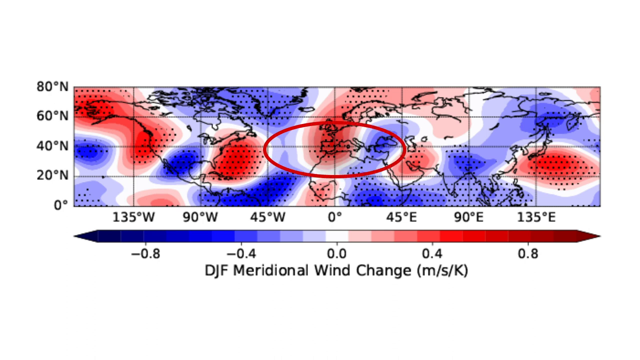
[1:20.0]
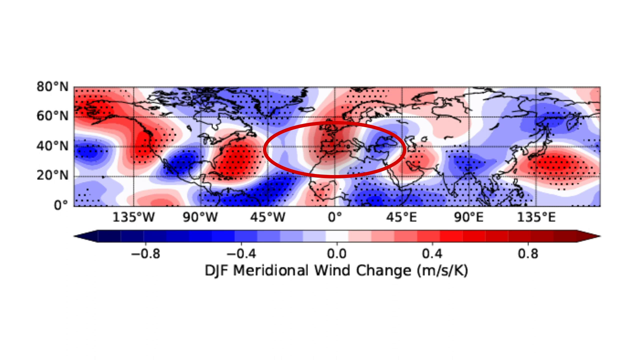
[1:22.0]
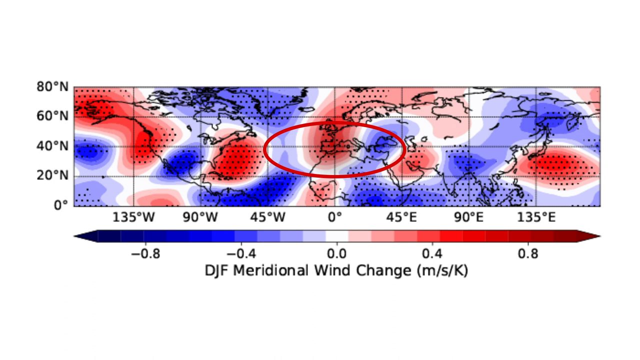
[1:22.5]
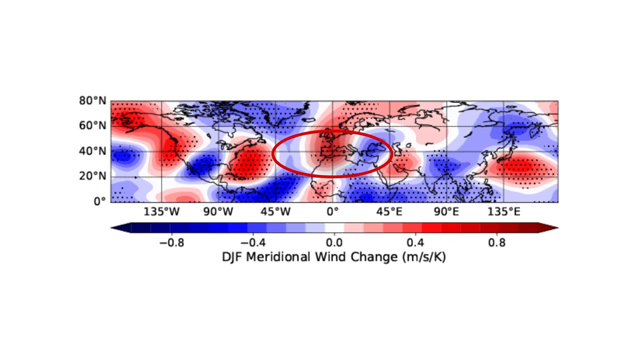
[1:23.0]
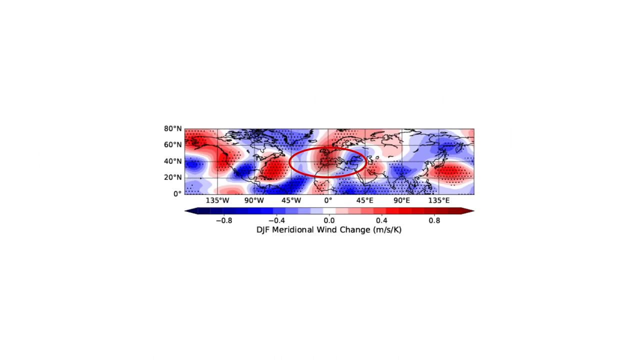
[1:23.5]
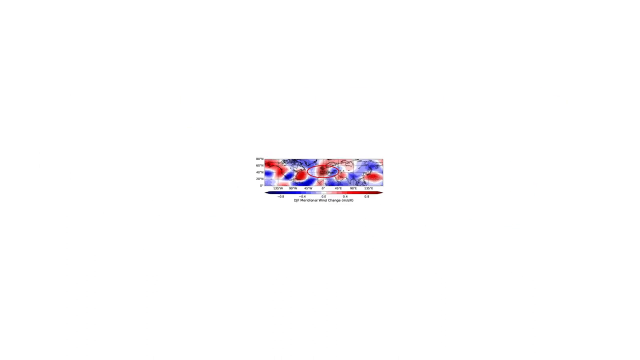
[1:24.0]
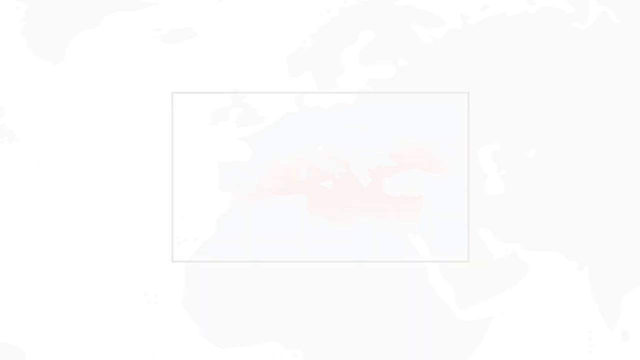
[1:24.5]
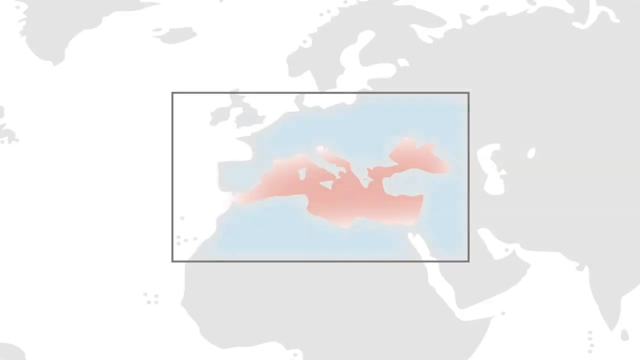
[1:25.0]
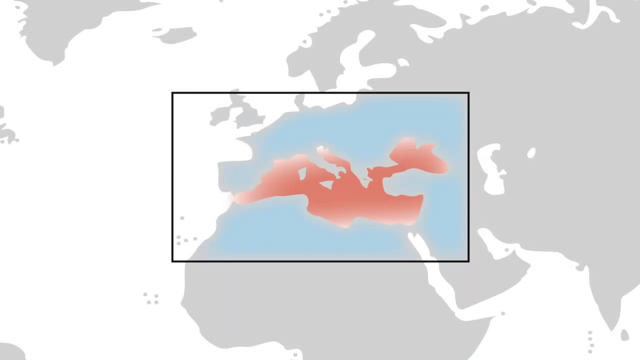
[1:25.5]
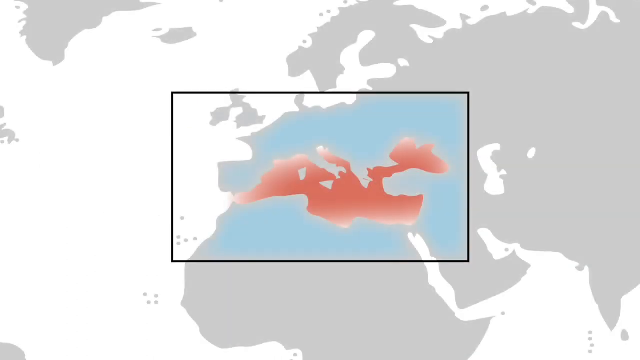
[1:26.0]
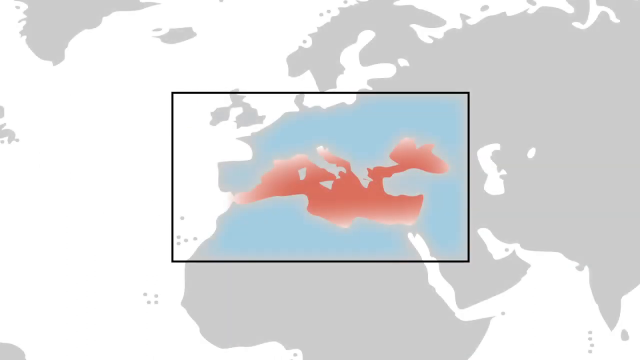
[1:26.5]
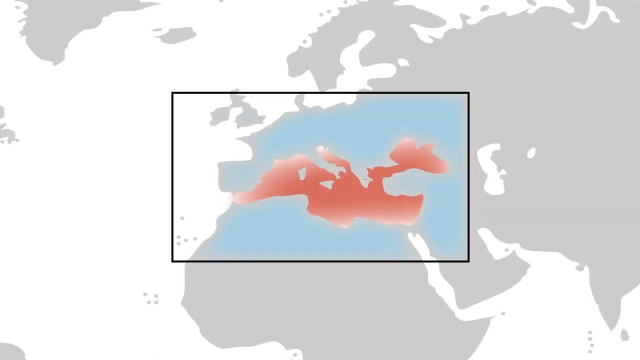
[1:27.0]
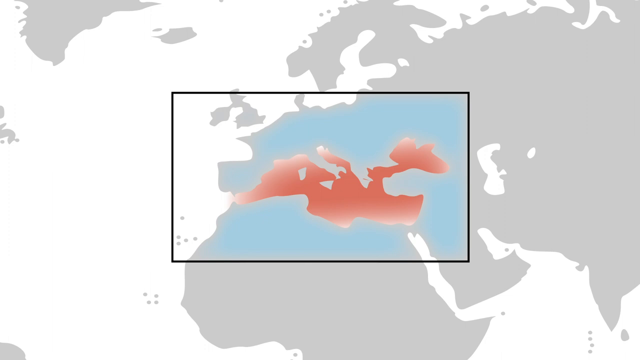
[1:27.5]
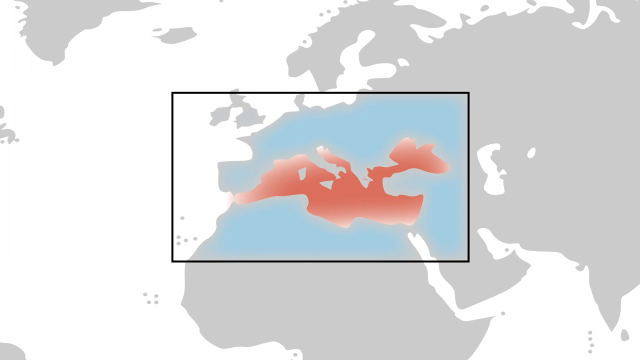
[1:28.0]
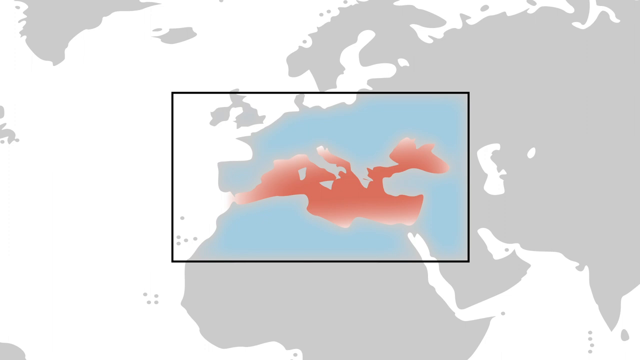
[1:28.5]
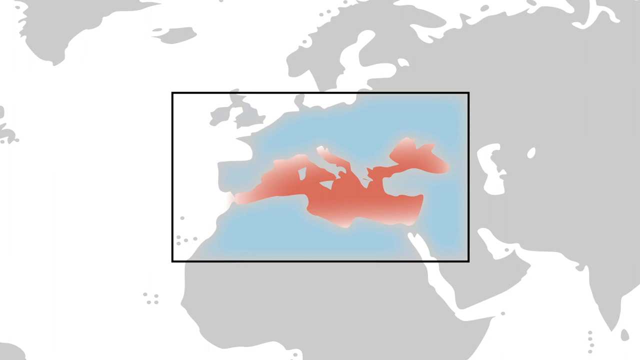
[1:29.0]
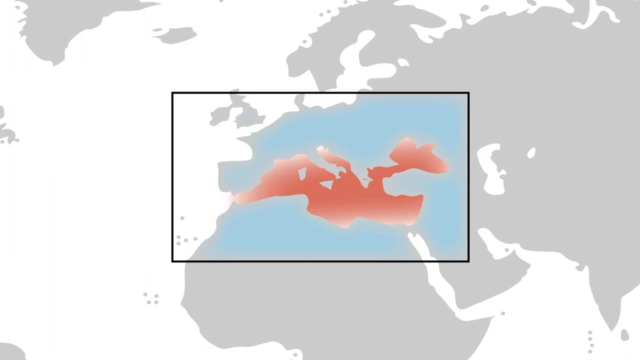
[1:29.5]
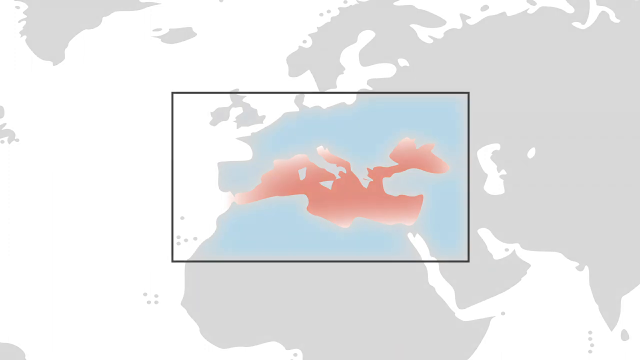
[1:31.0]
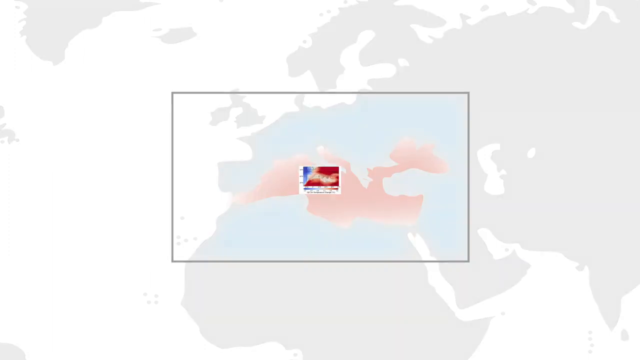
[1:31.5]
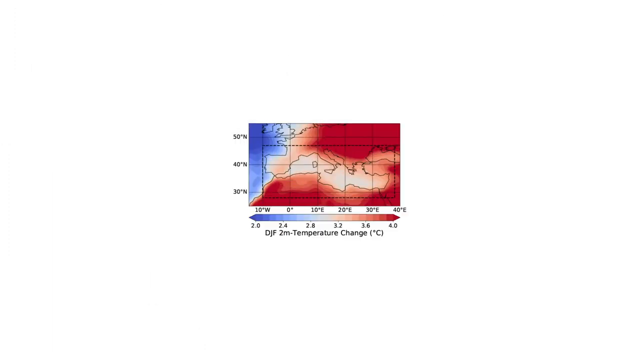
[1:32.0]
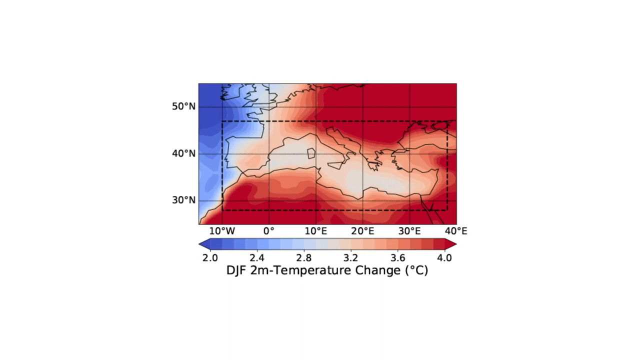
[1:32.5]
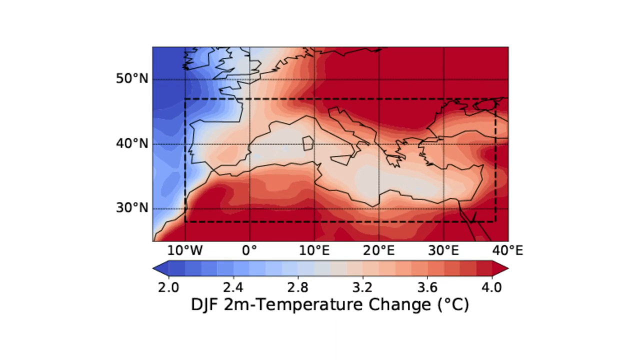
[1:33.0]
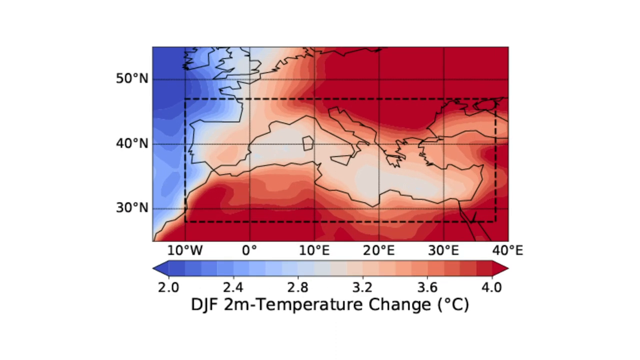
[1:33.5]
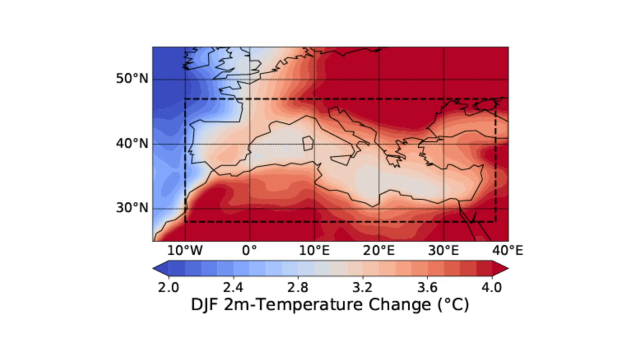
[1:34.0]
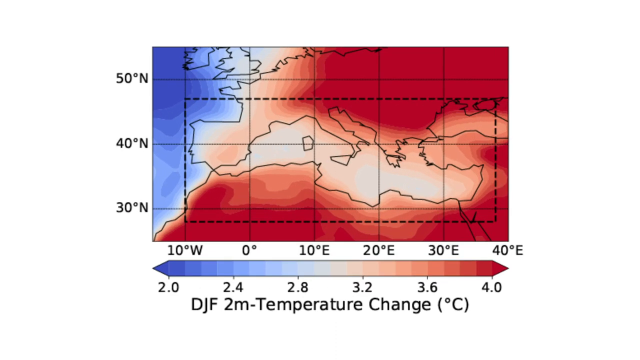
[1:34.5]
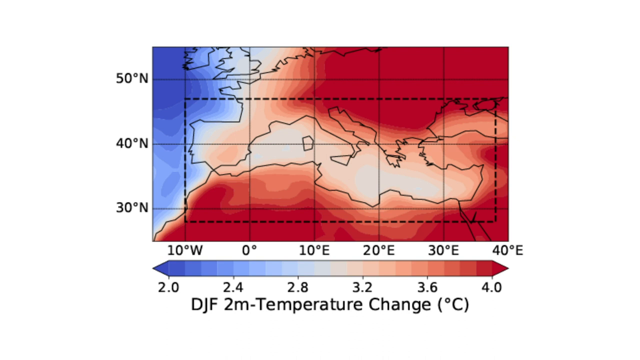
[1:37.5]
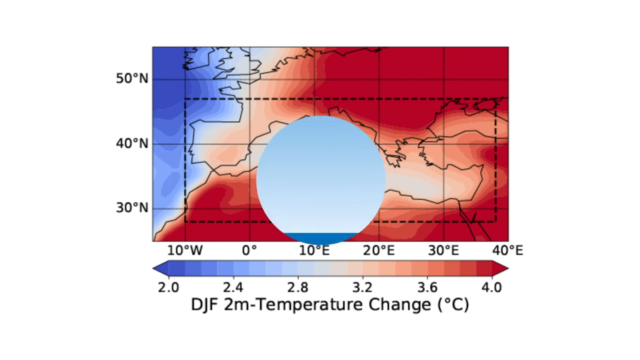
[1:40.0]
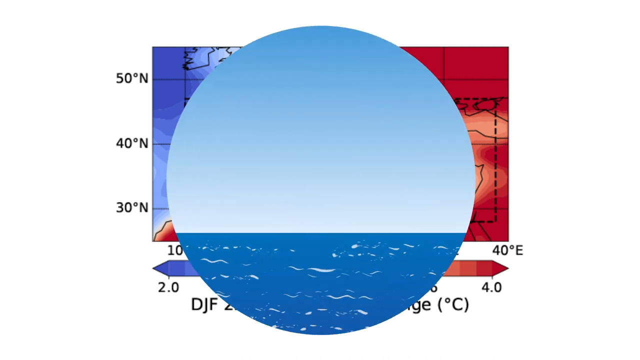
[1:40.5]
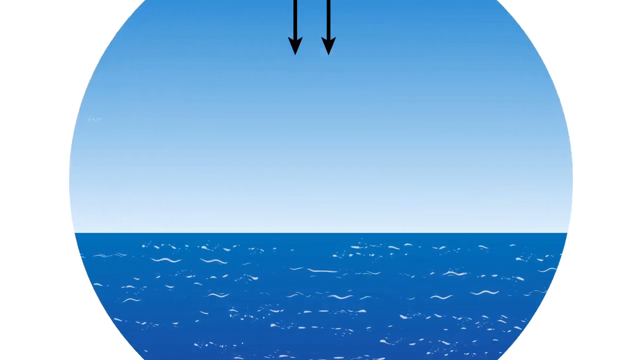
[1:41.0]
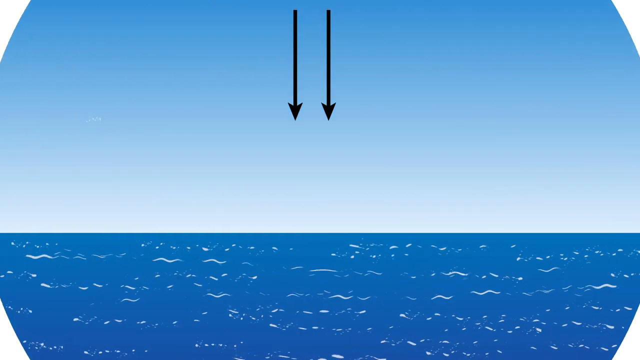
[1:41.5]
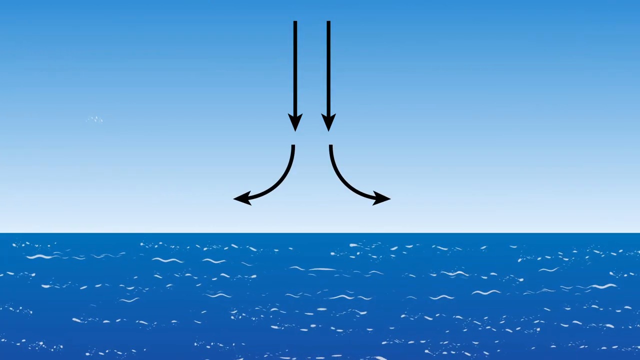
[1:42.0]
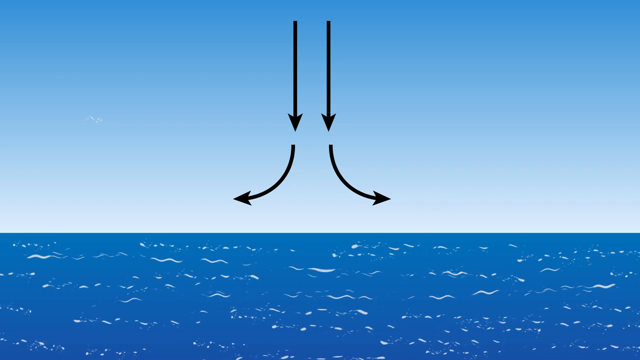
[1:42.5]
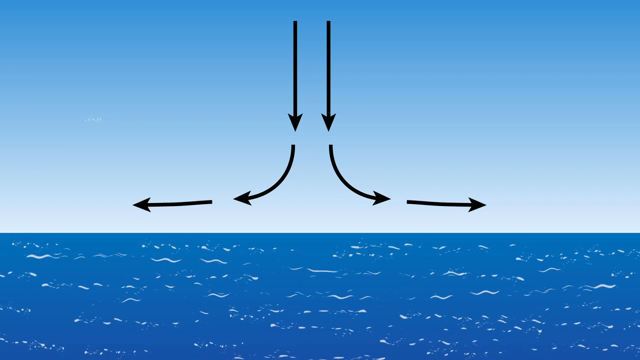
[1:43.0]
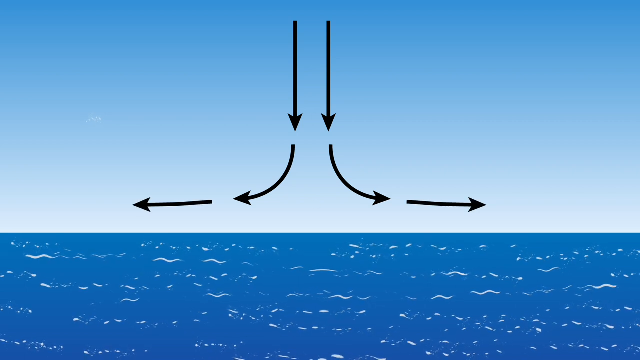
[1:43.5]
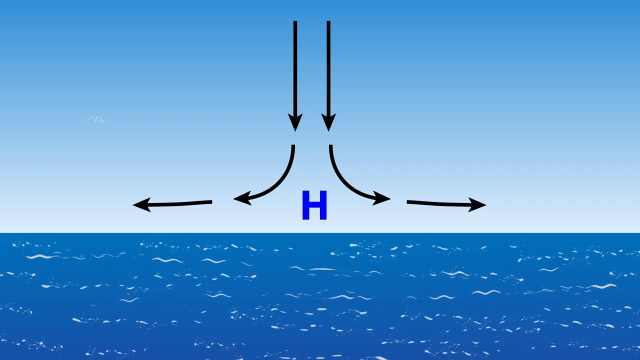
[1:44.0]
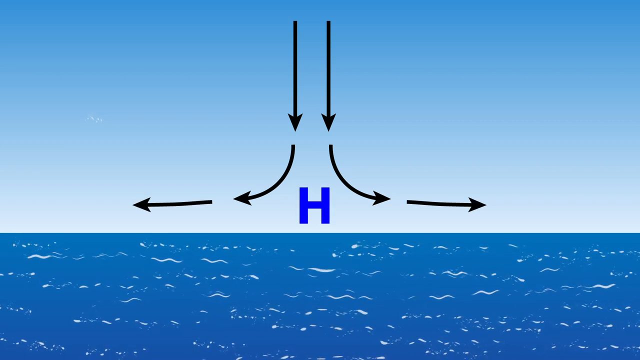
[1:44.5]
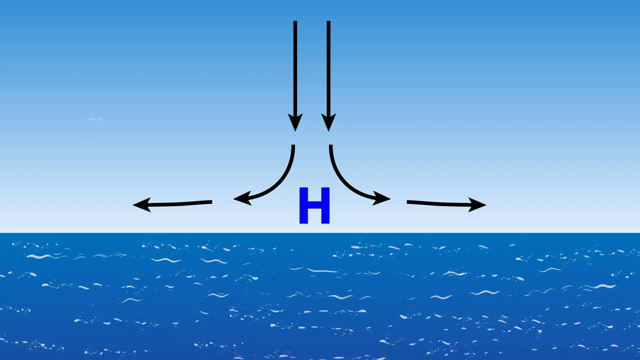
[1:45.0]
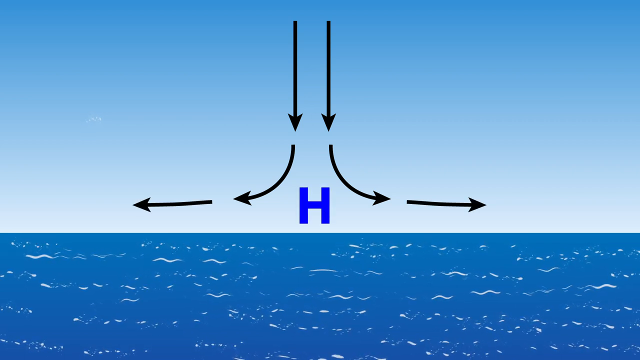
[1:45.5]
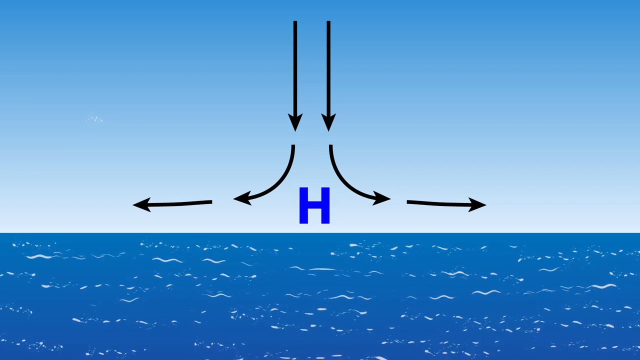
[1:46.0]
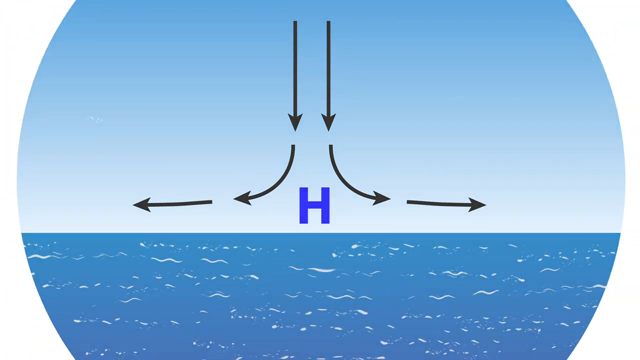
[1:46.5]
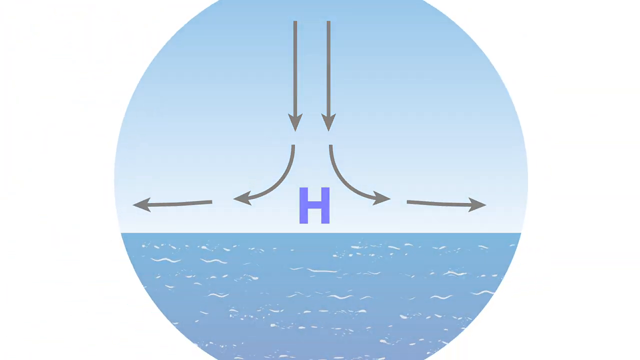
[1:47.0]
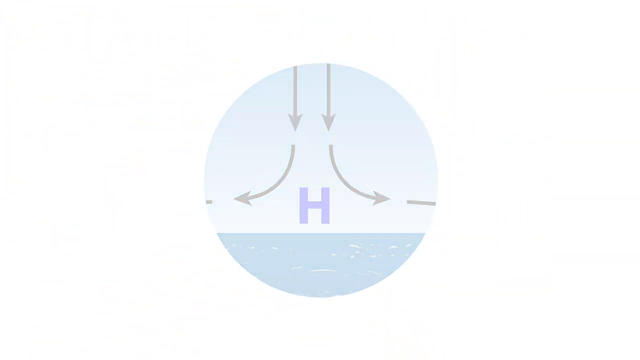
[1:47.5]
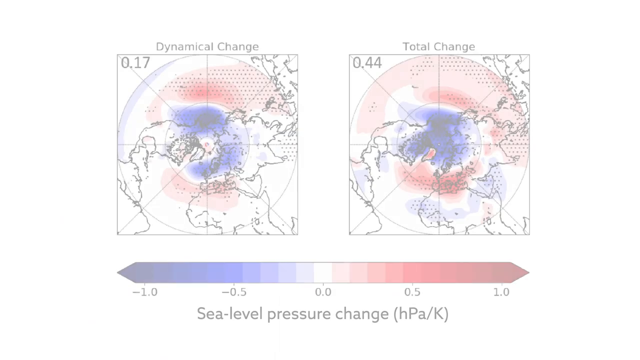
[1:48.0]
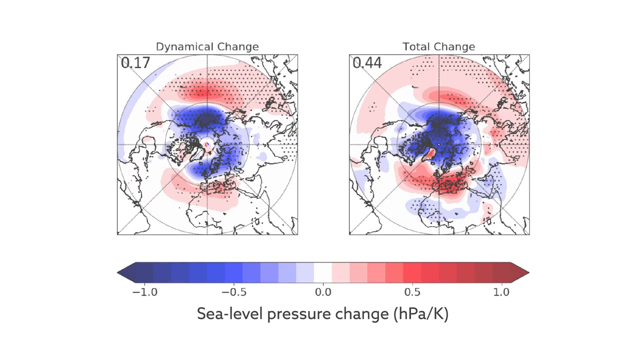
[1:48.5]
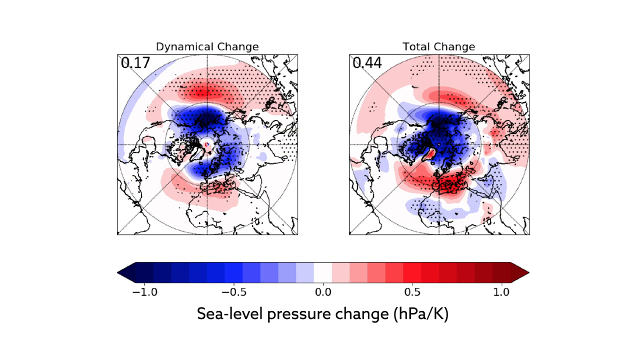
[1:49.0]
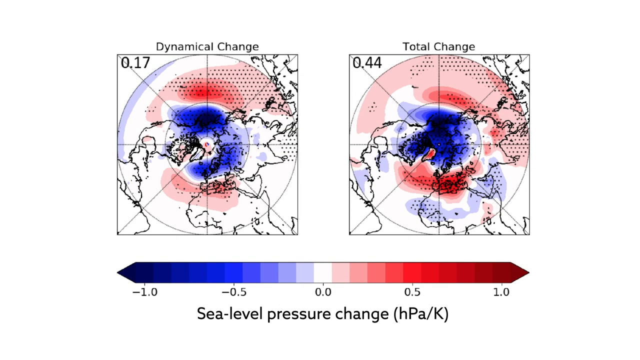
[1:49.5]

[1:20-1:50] The map gets very small and disappears in the center. Another map of the Mediterranean area follows, with a black rectangular outline around the Mediterranean area and a red spot in the middle. Then another map appears, representing temperature change in the Mediterranean area: the upper and lower areas are red, and an area to the left is blue. A color key at the bottom runs from blue on the left, indicating a 2 degree temperature change, to red on the right, indicating an increase of 4 degrees, so the north and south areas show temperature changes of at least 4 degrees Celsius. A black broken-line rectangle appears around the Mediterranean Sea area. Next is an image of ocean water with arrows coming down vertically from the top; one set of arrows then goes to the left side and one set to the right side. A blue H in the middle becomes larger. Then two maps appear, one on the left and one on the right, which look like they show the North Pole.